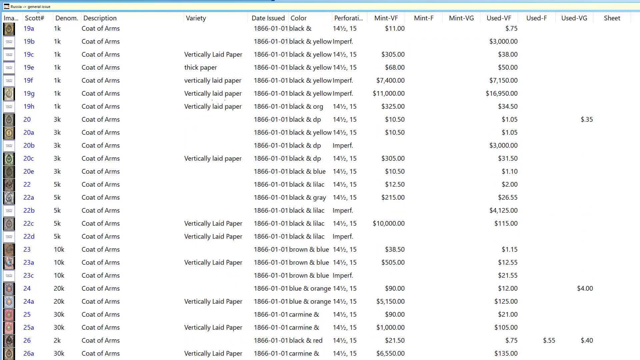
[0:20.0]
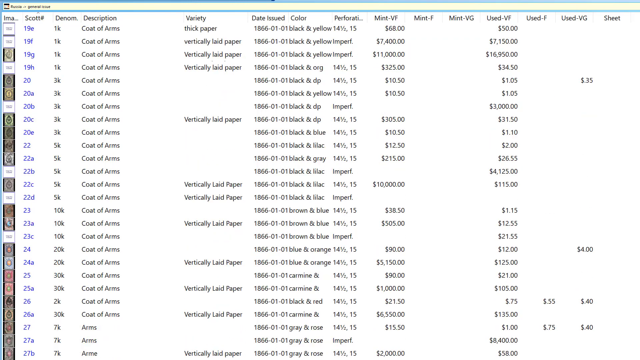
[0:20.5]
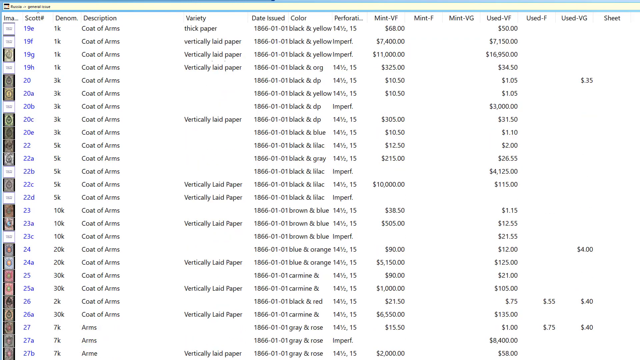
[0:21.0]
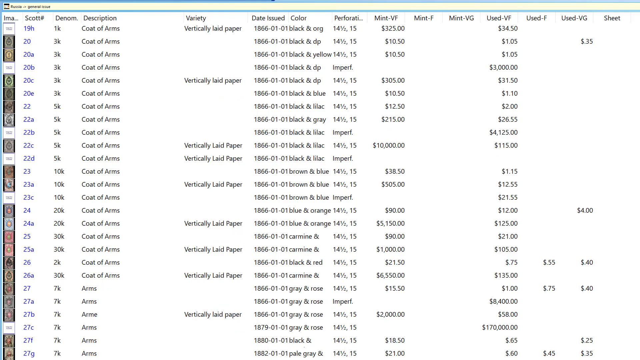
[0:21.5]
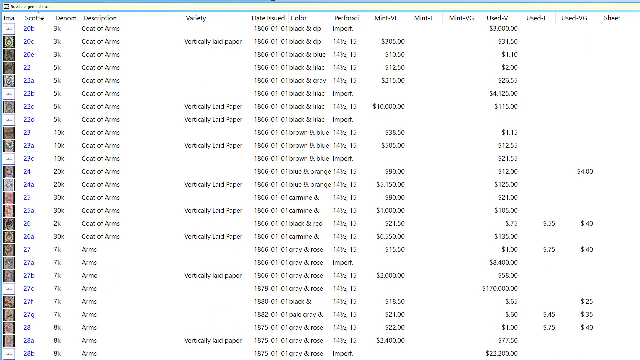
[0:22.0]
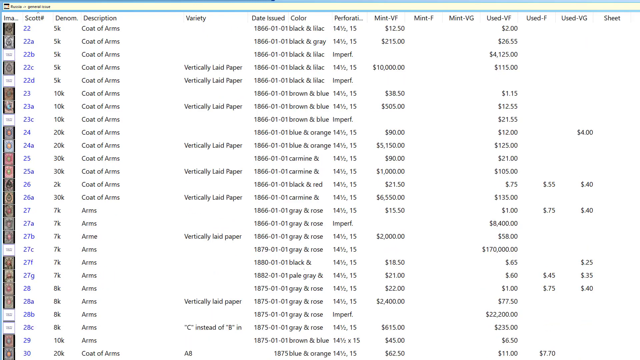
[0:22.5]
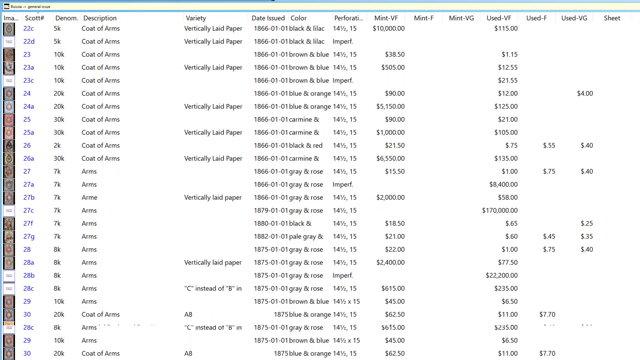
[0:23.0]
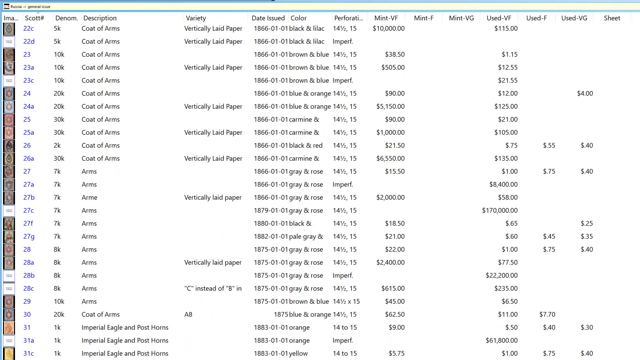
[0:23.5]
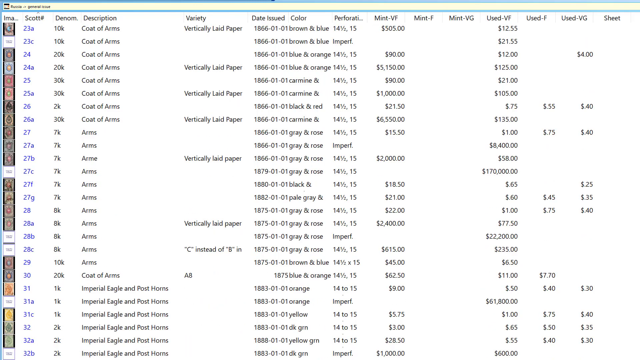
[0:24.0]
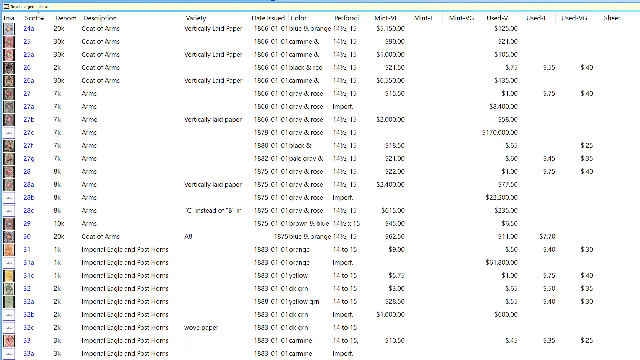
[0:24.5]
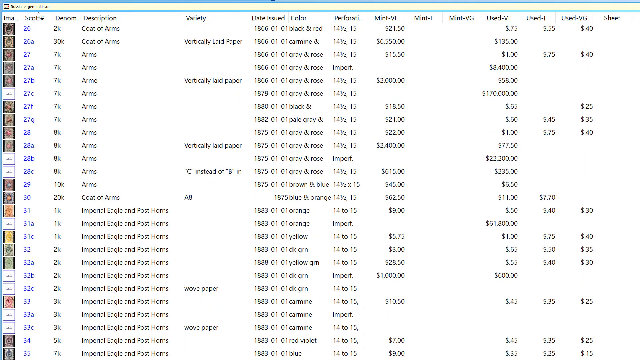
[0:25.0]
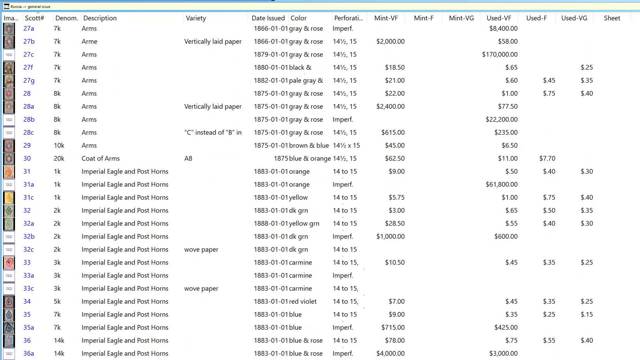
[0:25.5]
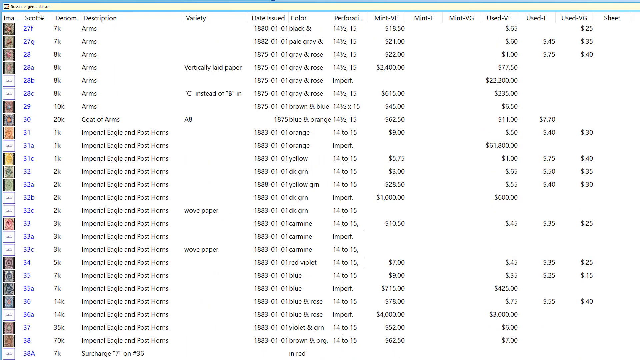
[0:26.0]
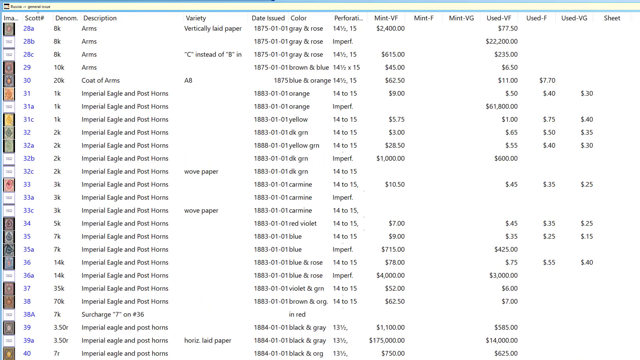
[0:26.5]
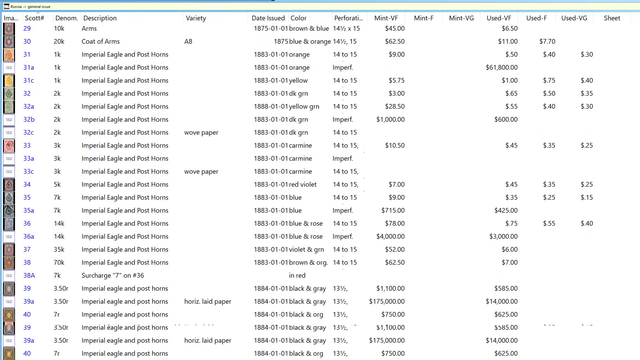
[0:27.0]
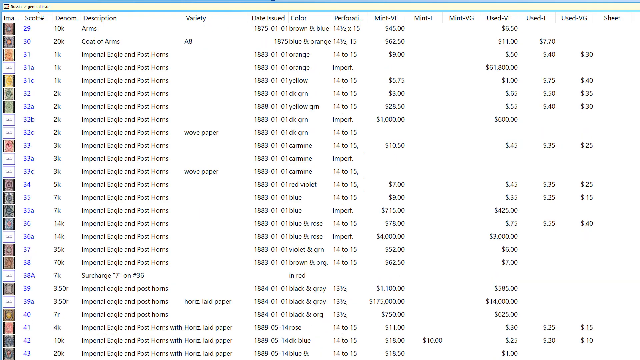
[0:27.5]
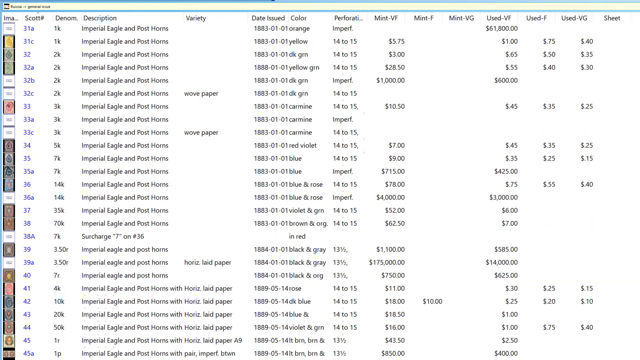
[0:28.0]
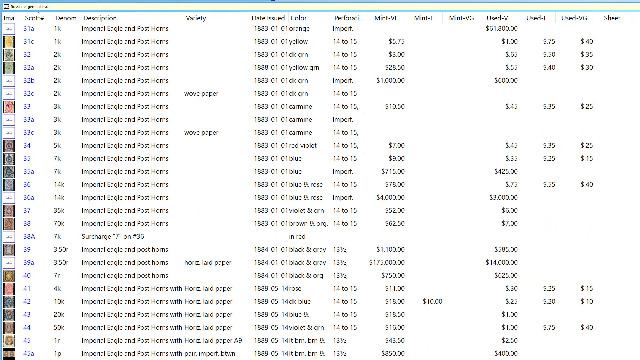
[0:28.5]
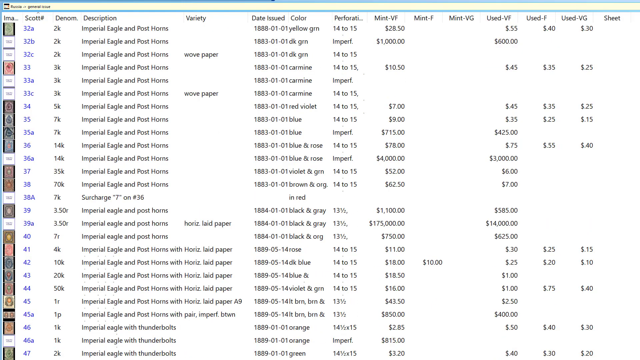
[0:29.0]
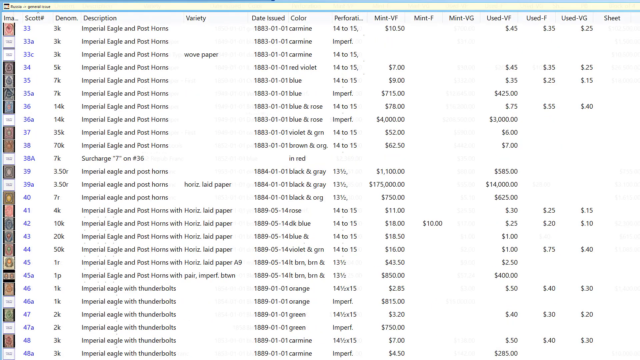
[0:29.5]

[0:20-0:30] Someone scrolls down through a white computer screen showing a massive database or spreadsheet with many rows, and more rows of data appear as the scrolling continues. The data appears to be about different stamps, seemingly a database or spreadsheet of stamps. There are columns for description, image, variety, date issued, color, and the perforation of each stamp. Many of the descriptions near the beginning say "coat of arms", below that "arms", and then "imperial eagle" and "post horns".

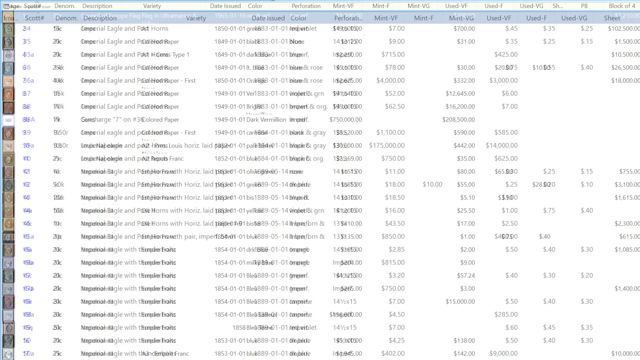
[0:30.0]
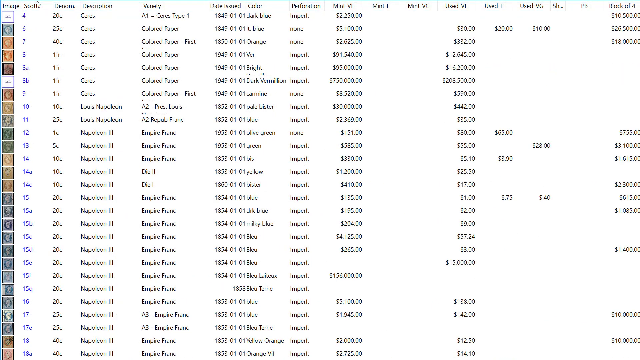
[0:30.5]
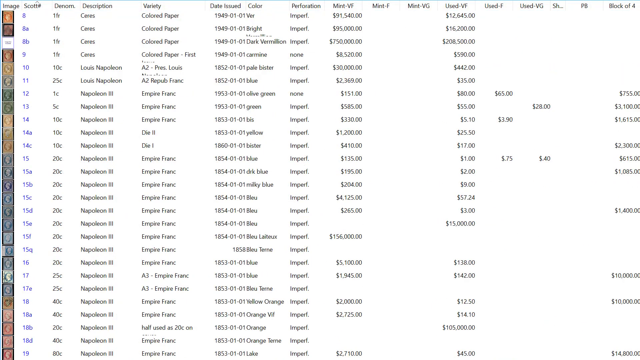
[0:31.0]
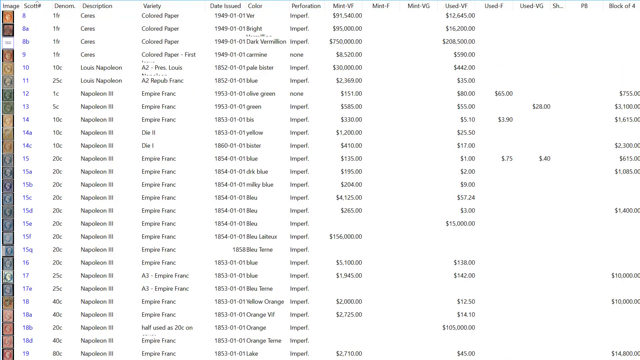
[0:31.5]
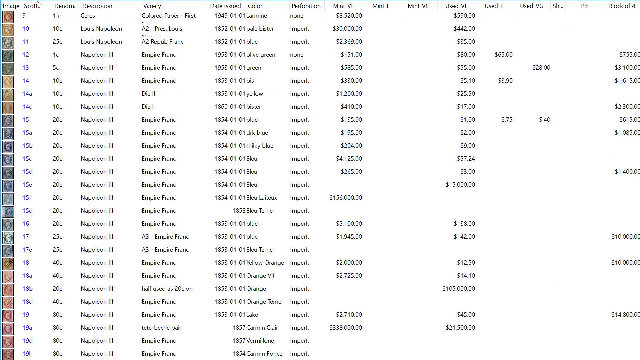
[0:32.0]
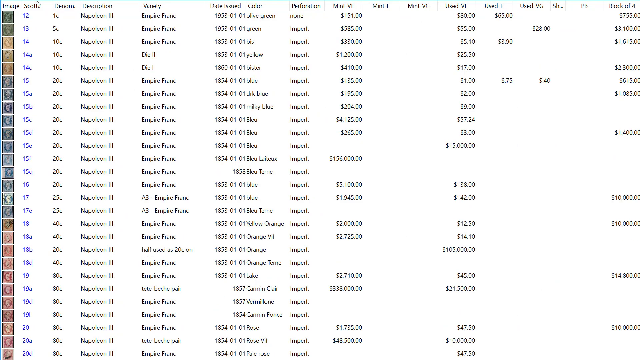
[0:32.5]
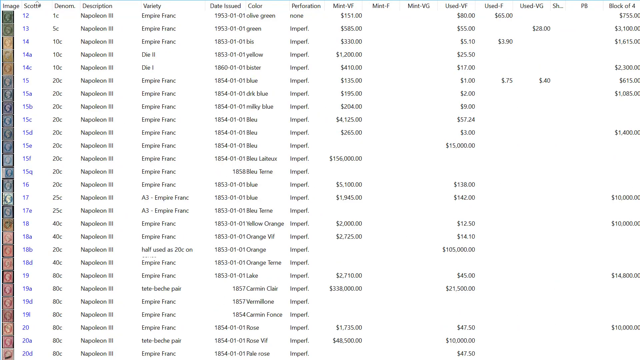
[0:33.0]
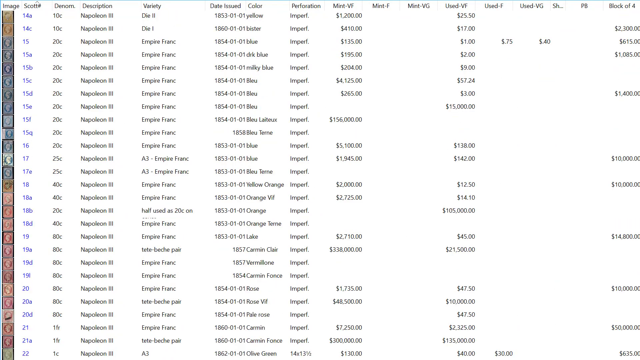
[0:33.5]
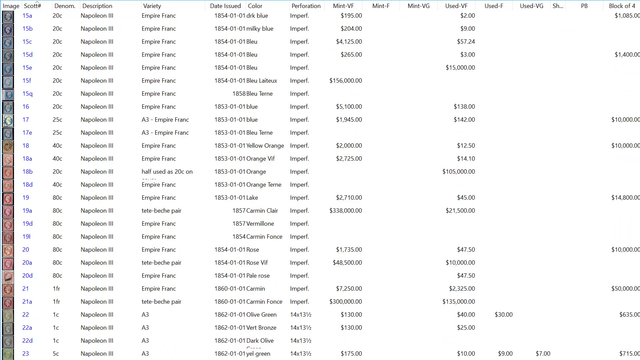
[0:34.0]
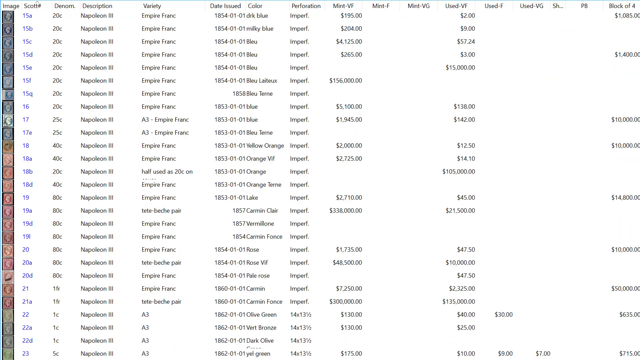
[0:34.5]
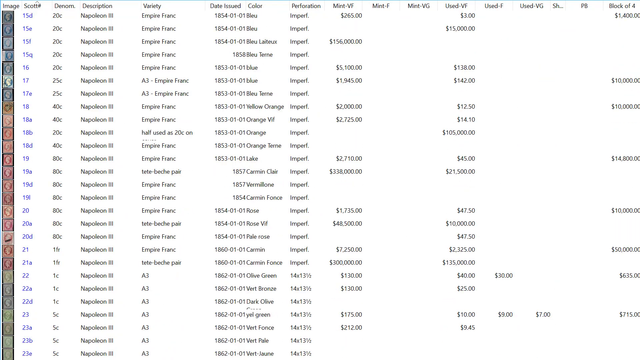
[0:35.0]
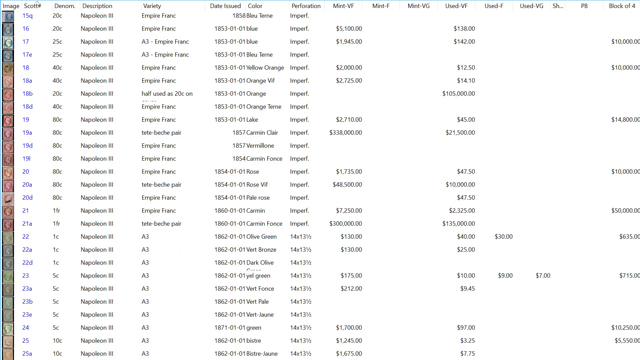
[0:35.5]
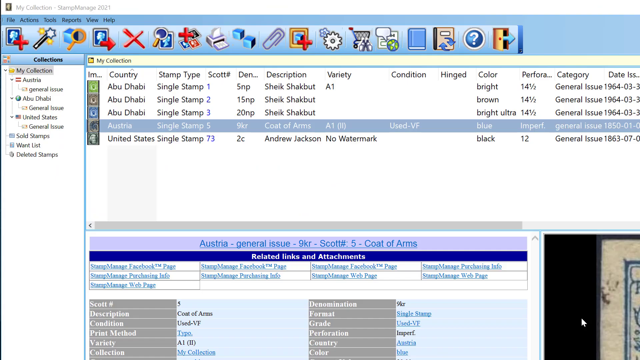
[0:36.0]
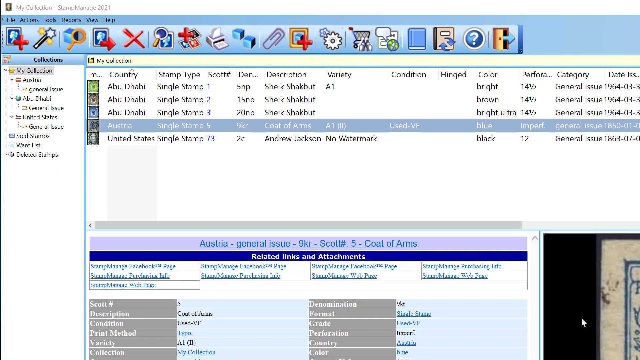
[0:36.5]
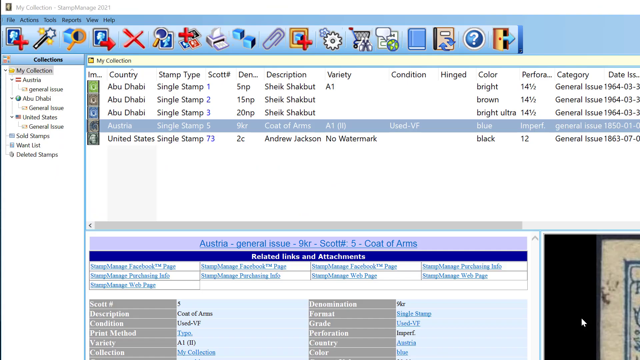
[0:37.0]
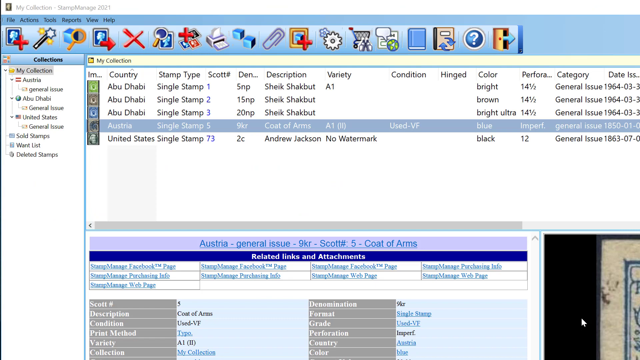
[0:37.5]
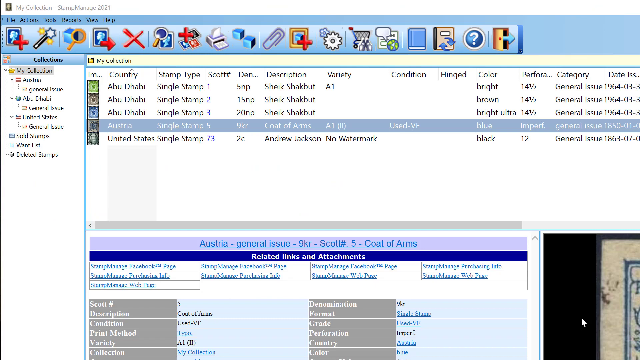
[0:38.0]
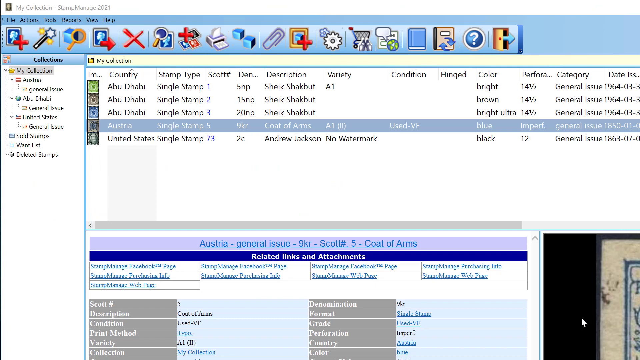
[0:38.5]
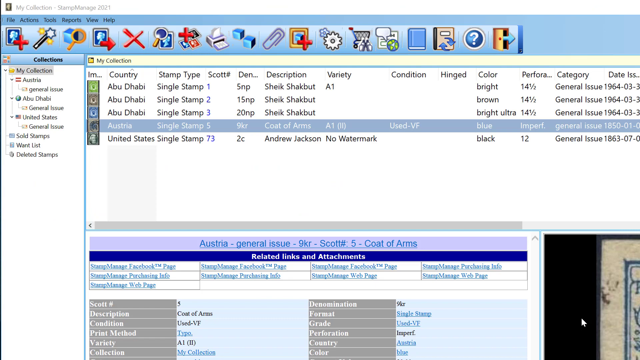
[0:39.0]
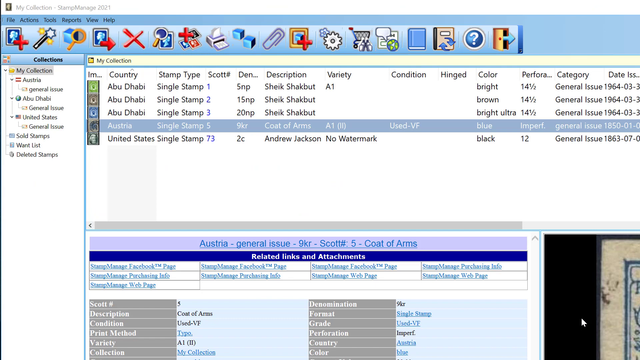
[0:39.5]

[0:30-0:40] The man continues scrolling through the database of stamps. The description column reads "Napoleon III" for each stamp, and there are different kinds of variety. The stamps on the left side are various colors, such as green, yellow, blue and red. After more scrolling, the screen switches to a new window with a PC program open. It has a blue bar at the top with various icons, such as a paperclip and a printer. On the left are some options to click, and on the right is an open folder labeled "My Collection" with different rows of stamps.